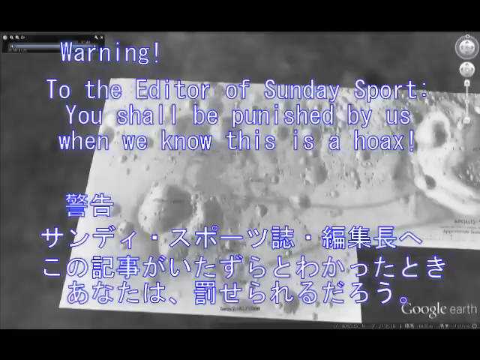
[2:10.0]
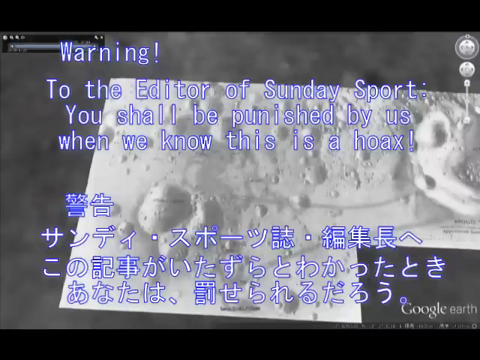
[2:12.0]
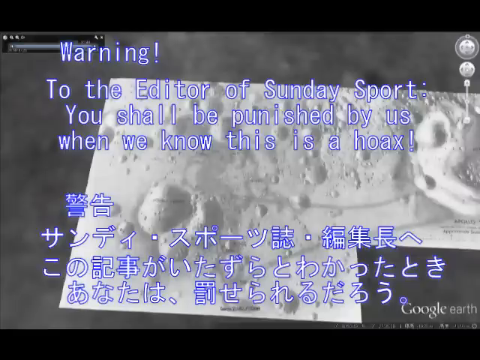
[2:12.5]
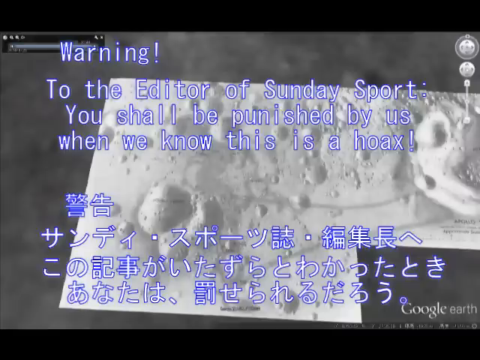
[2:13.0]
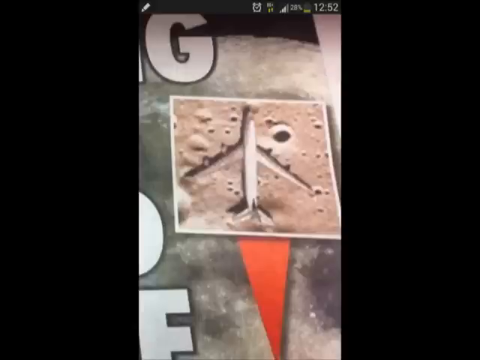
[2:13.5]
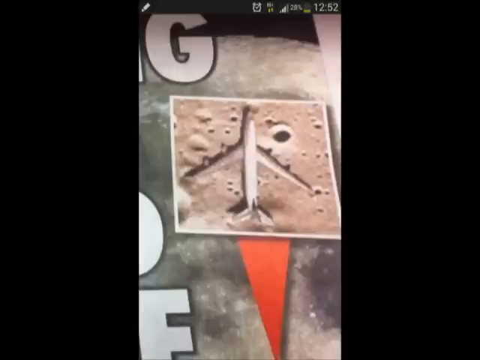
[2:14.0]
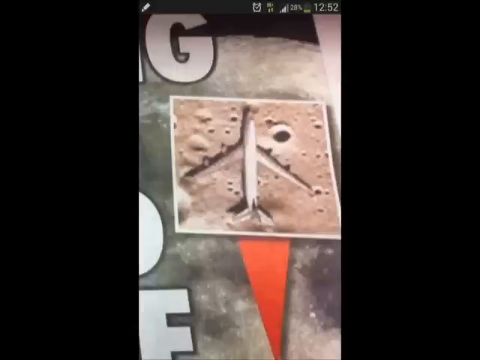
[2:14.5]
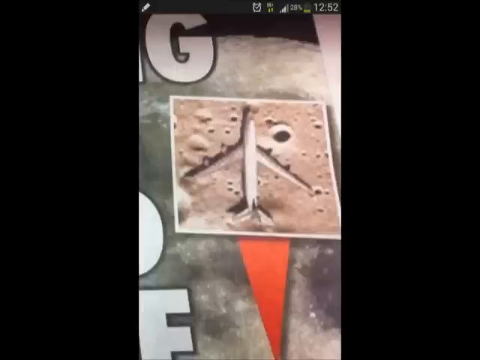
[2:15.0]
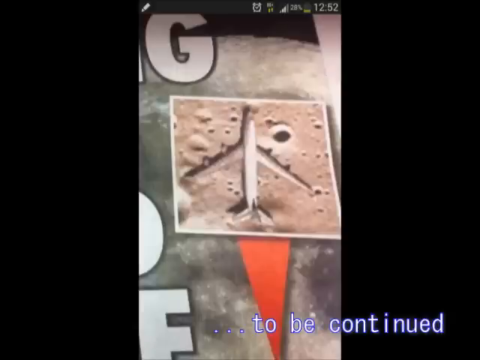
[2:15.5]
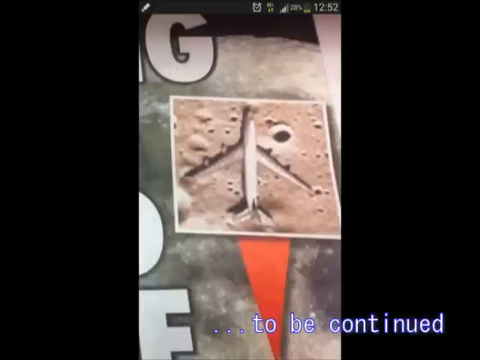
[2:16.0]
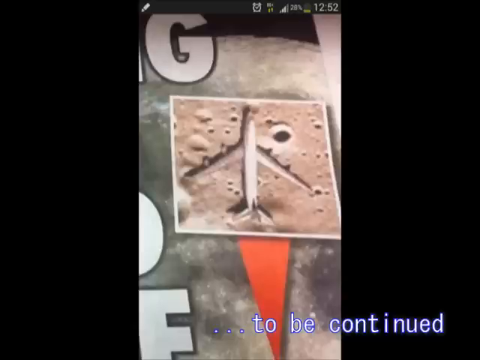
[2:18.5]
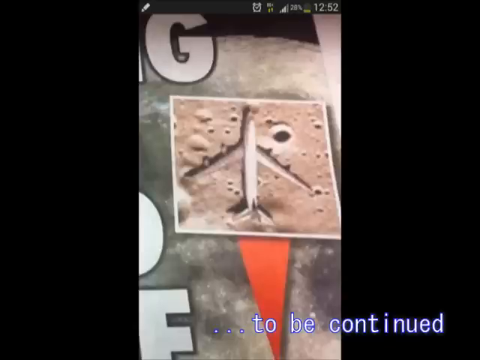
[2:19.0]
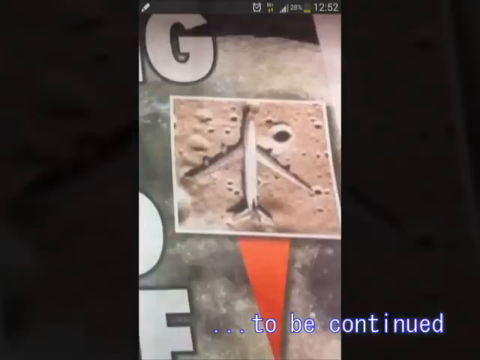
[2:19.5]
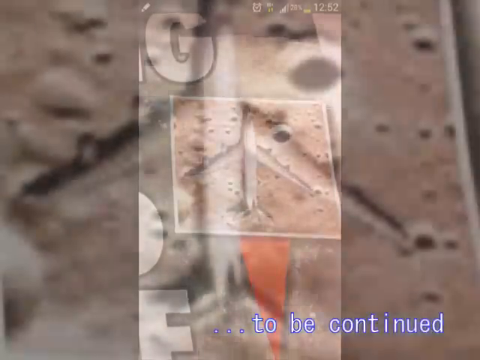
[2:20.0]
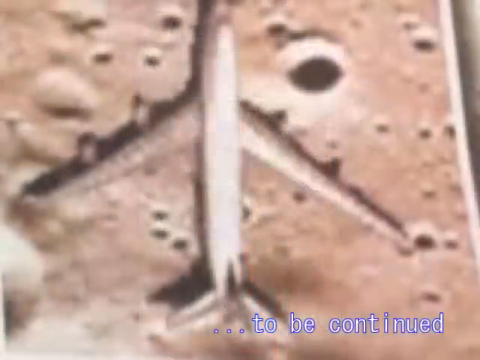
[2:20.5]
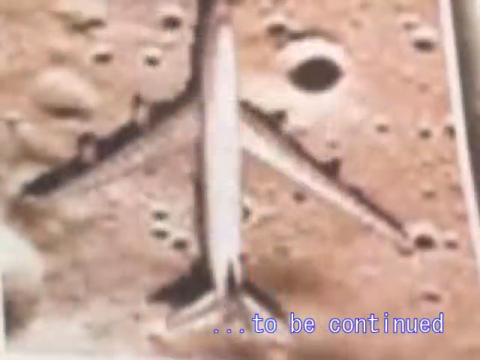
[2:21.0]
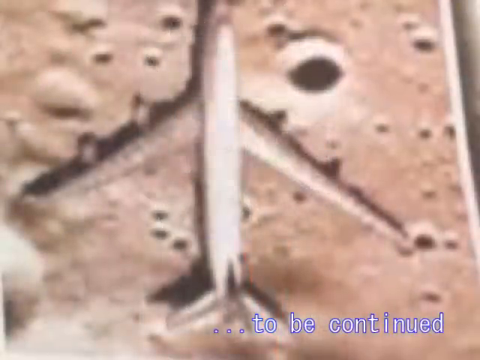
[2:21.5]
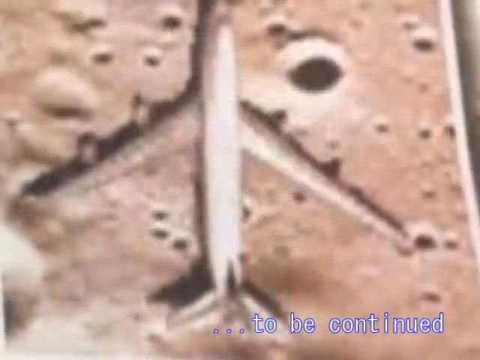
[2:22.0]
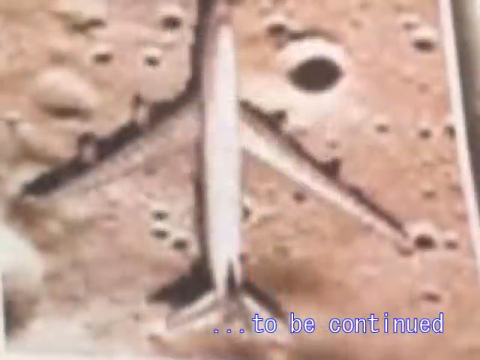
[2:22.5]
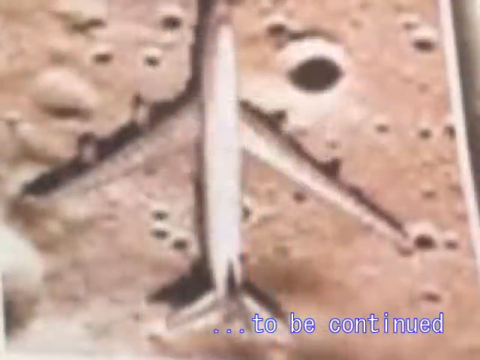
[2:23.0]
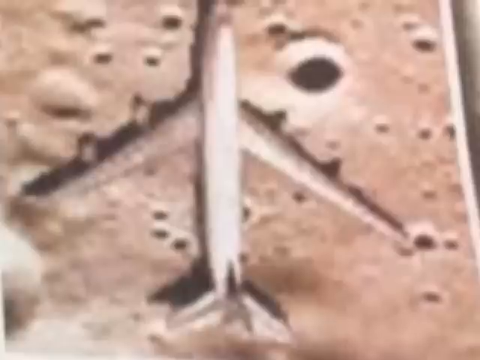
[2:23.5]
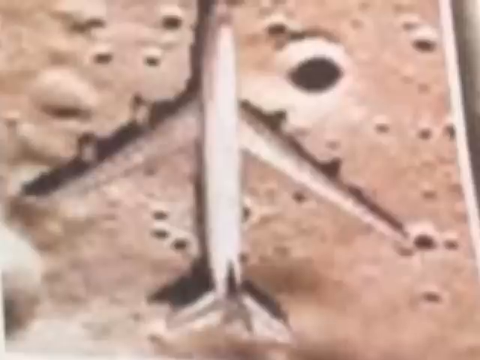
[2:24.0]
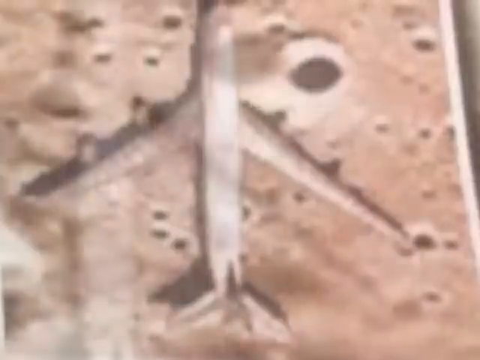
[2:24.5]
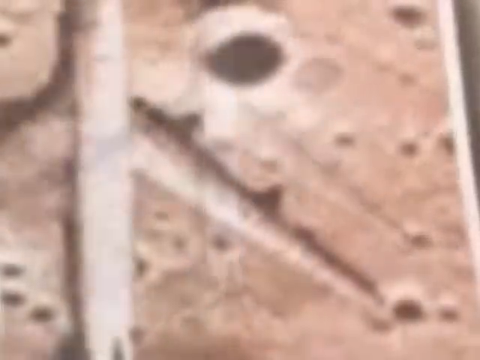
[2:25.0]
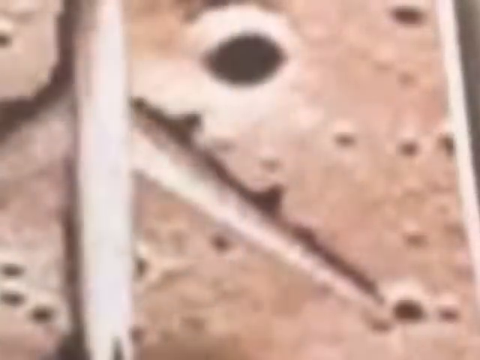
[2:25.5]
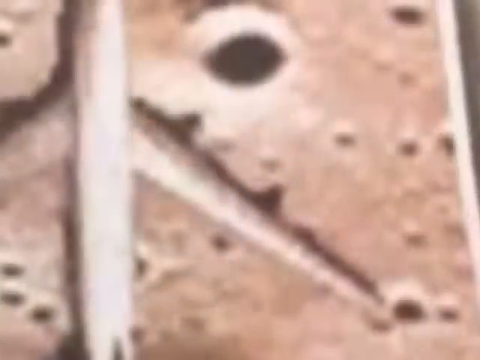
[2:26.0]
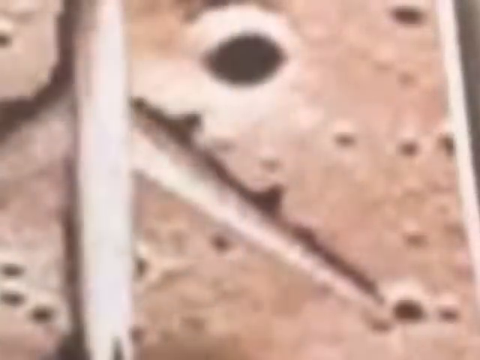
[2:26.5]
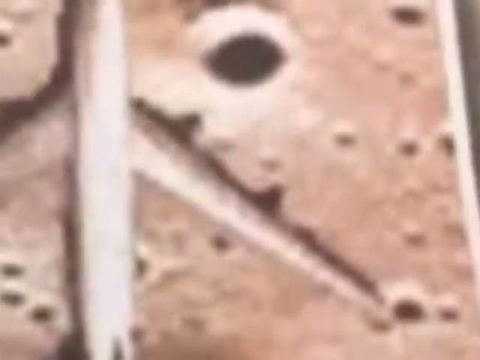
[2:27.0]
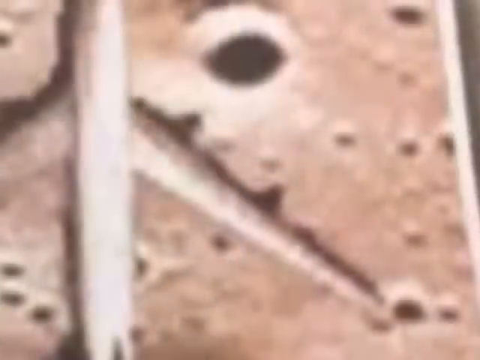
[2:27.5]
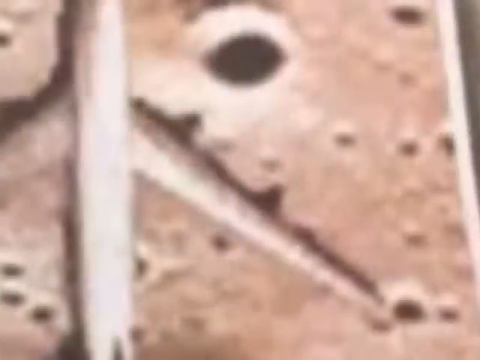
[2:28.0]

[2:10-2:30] An up-close image shows what looks like the plane stranded on the moon, with the caption "to be continued." The image of the plane becomes more focused and close up; the plane appears to have four jet engines like a large Boeing plane, with a background of the moon behind it. The image is focused in and out with the caption "to be continued."